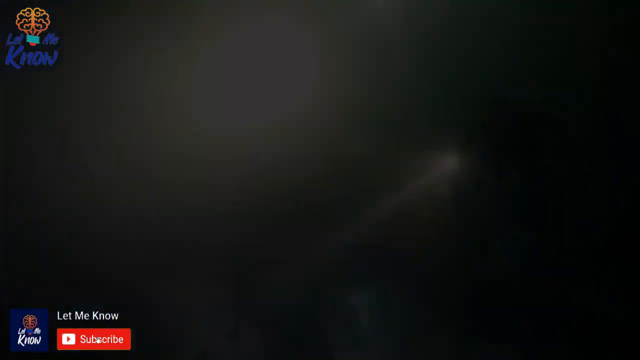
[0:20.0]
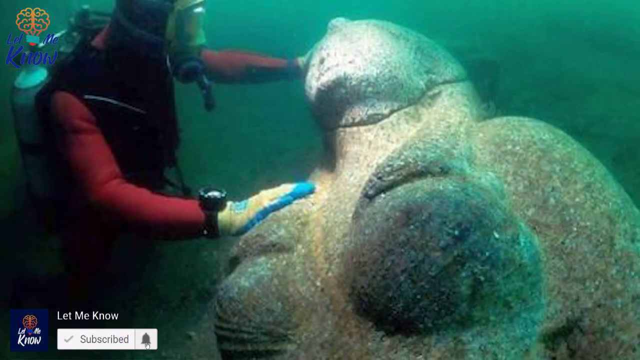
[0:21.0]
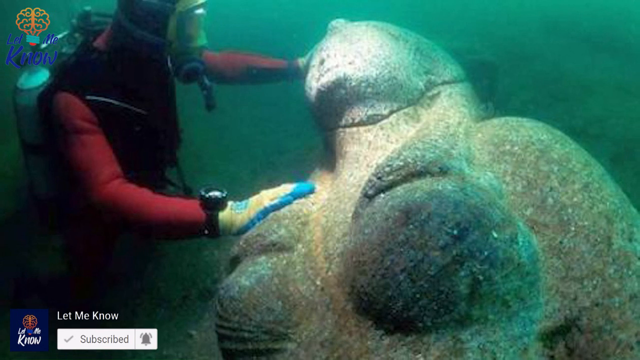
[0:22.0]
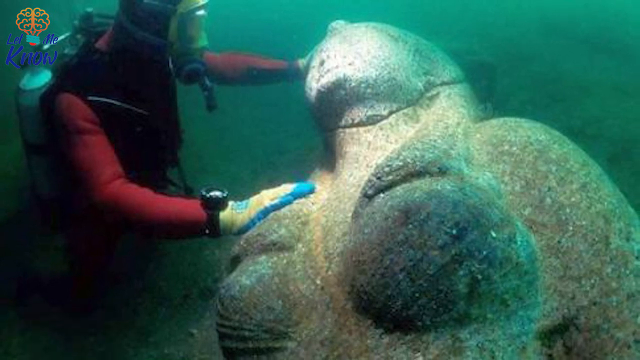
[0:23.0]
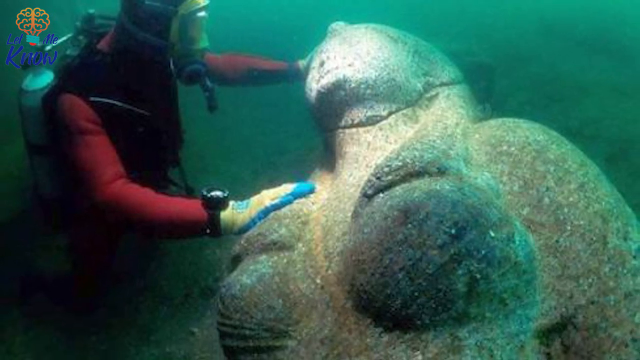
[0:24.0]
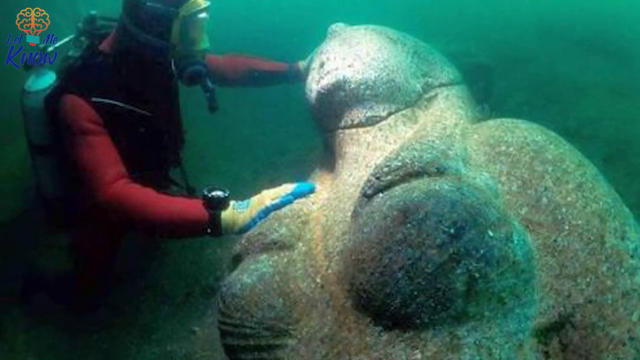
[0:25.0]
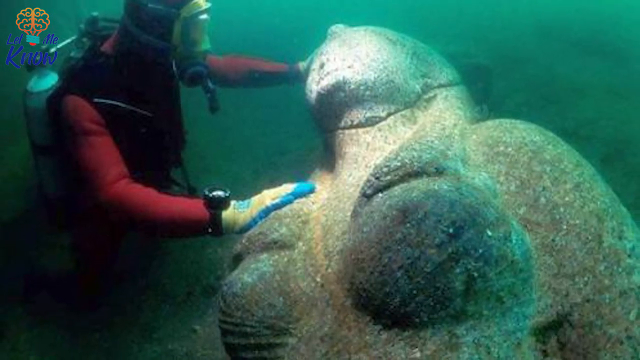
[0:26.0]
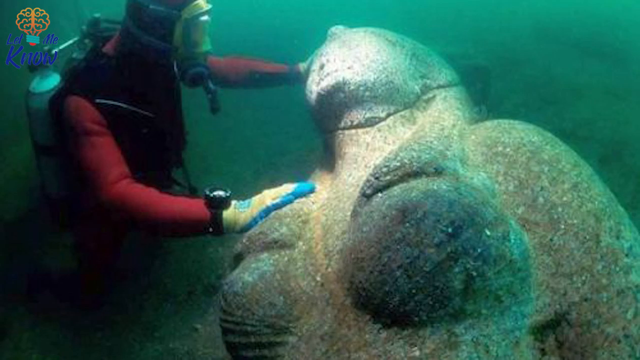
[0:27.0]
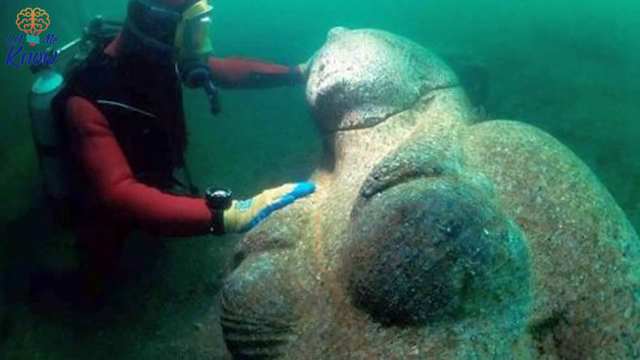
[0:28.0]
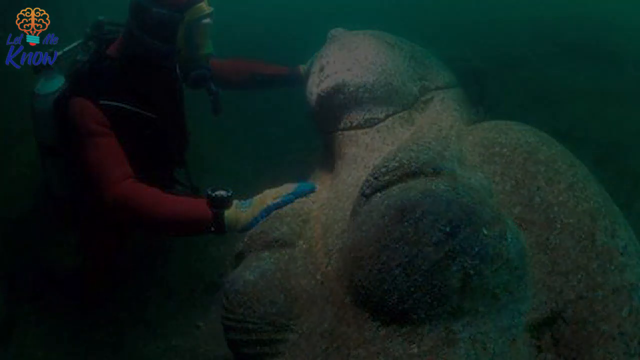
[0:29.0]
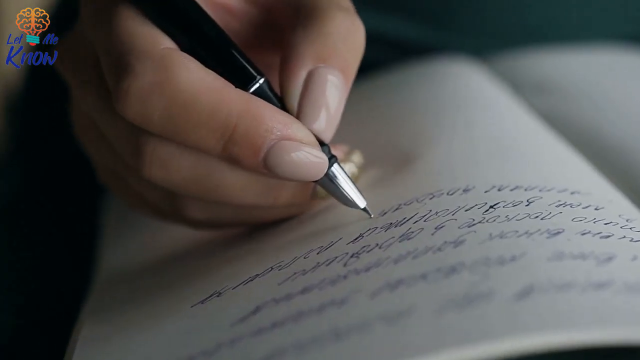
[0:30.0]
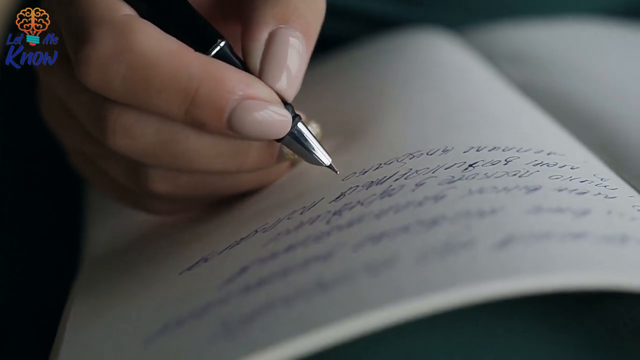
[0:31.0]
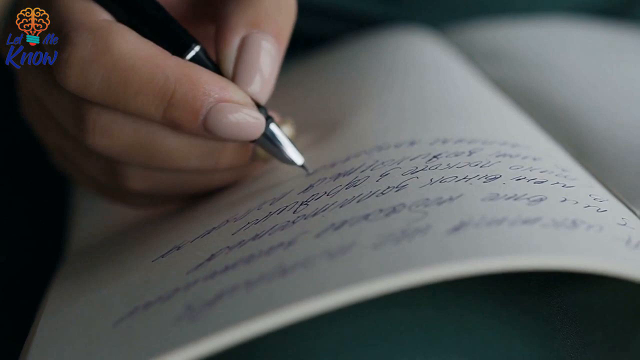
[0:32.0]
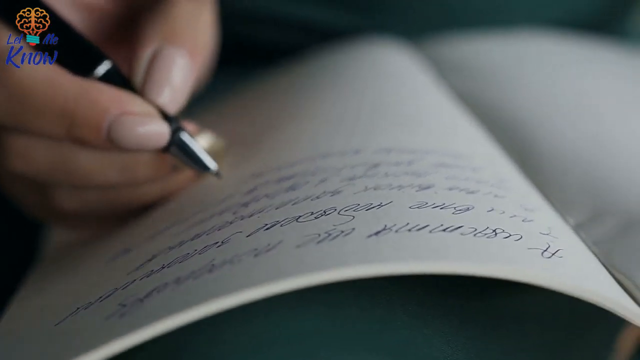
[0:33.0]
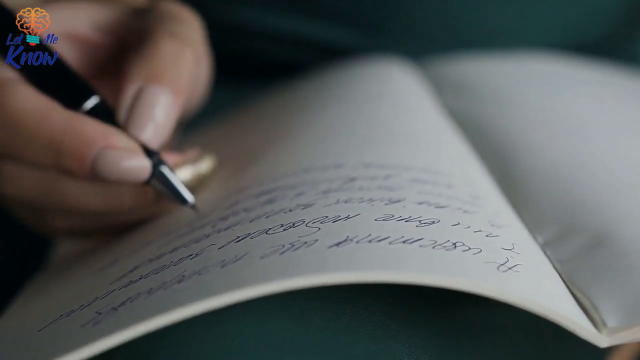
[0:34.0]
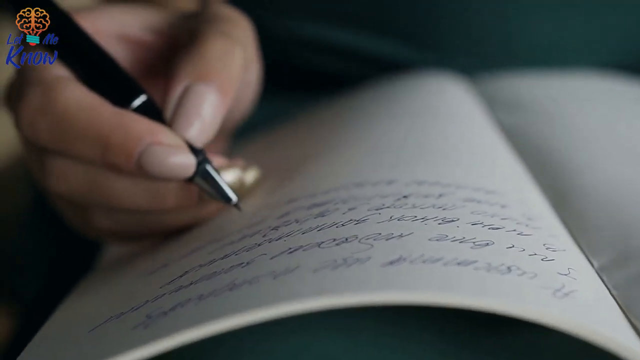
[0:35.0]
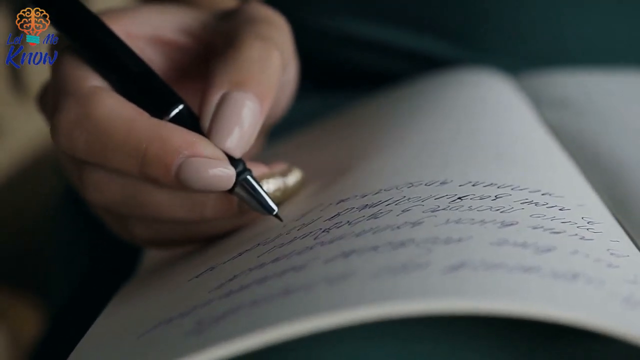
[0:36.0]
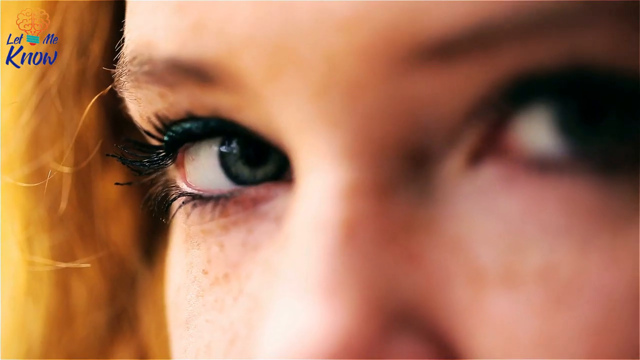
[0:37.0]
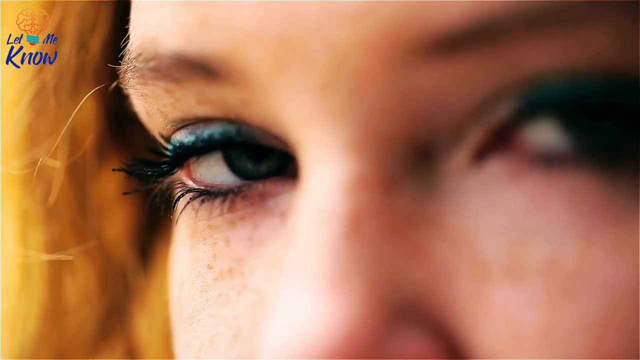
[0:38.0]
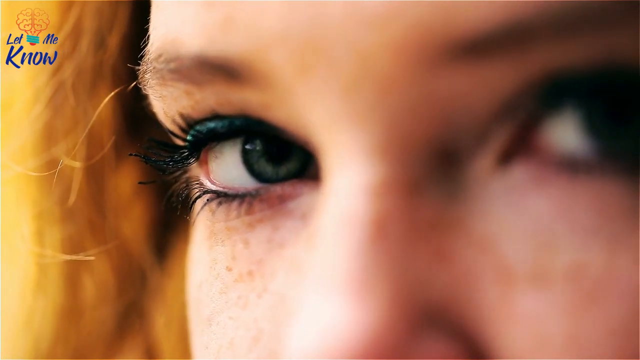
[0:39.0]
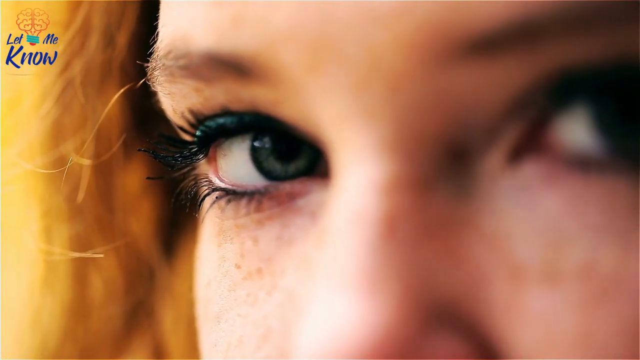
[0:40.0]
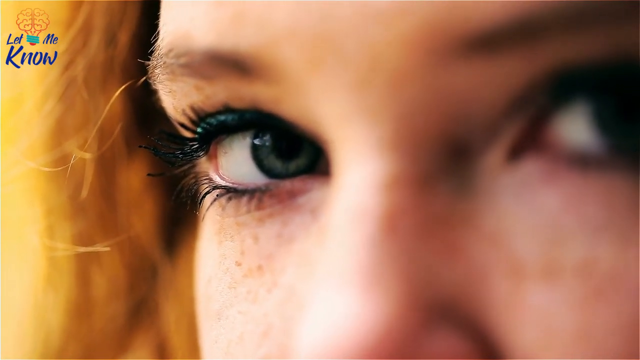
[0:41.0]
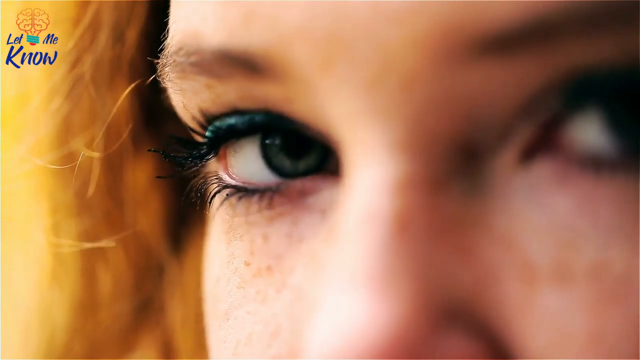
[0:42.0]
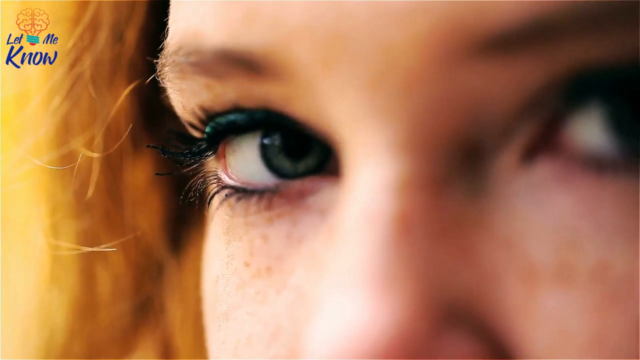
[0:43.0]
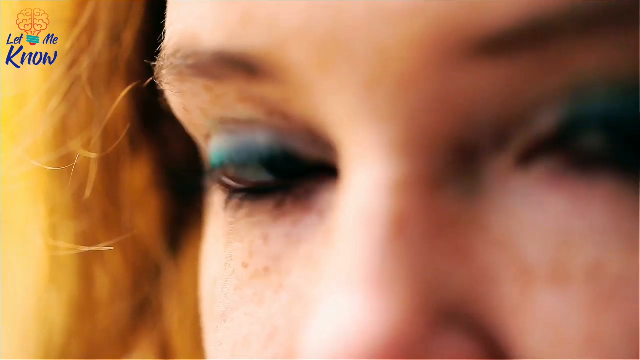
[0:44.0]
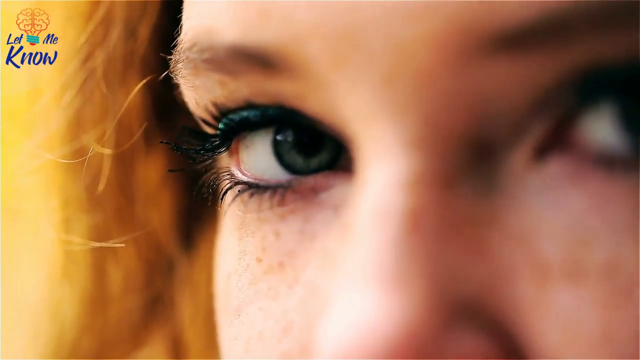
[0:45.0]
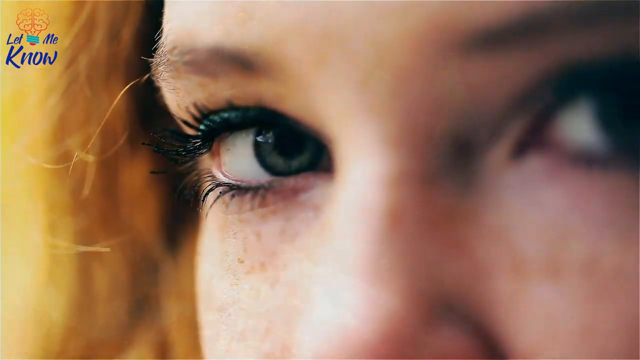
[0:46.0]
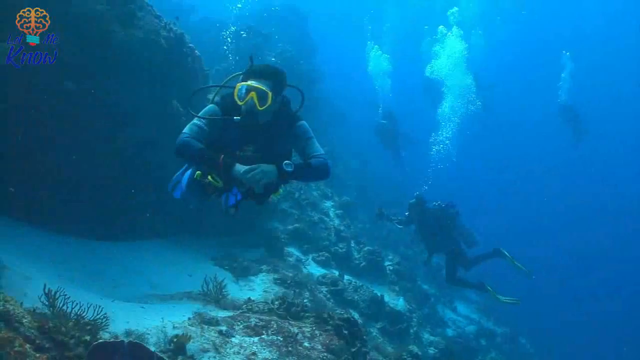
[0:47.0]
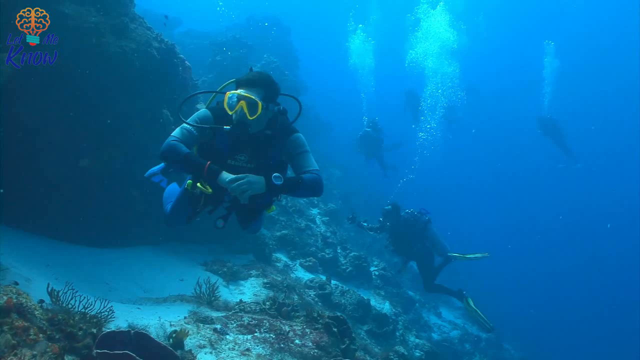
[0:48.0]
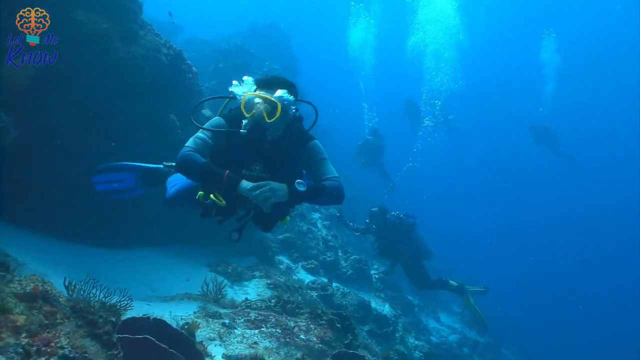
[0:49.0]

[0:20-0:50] Objects lie at the bottom of the sea. One diver in red gear, with a watch and gloves, touches and looks at something that appears to be a female statue made of stone. A logo is in the top left corner. Handwriting appears, with very smooth transitions. A woman looks toward the viewer, and a female eye blinks slowly. The scene then cuts back into the depths of the ocean: blue water, bubbles, and yellow, scuba-like glasses. Coral reef covers the sea floor, and the terrain, water and scuba gear are visible.